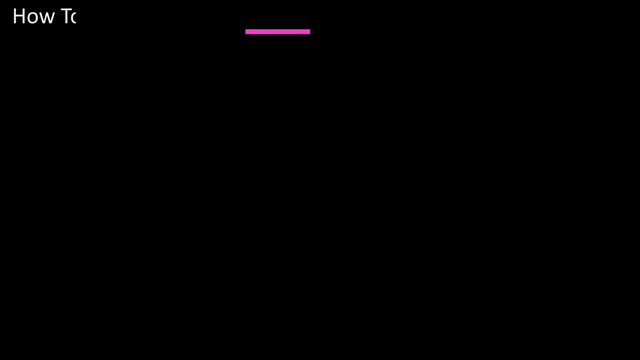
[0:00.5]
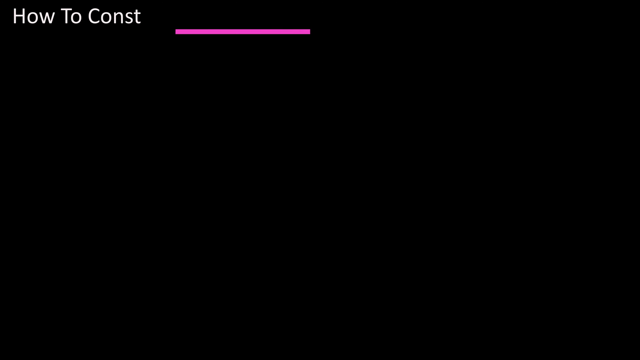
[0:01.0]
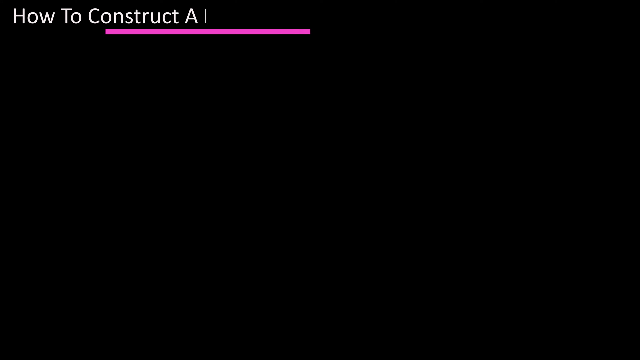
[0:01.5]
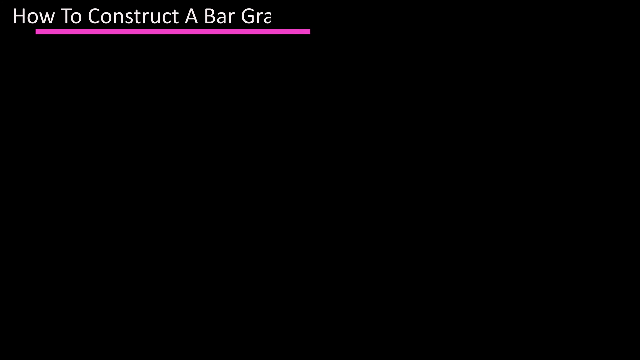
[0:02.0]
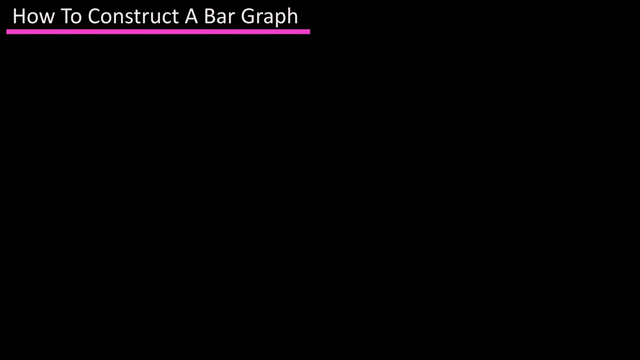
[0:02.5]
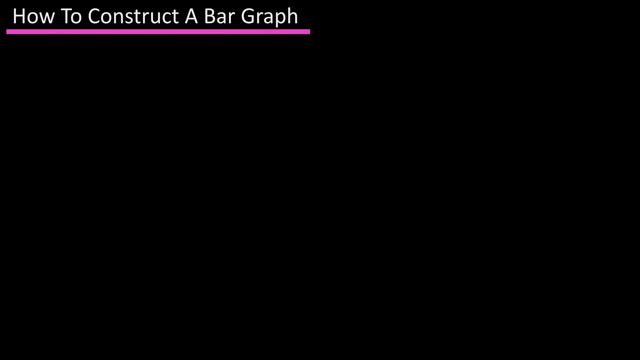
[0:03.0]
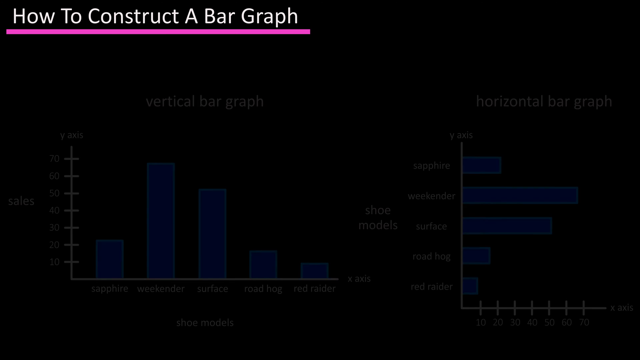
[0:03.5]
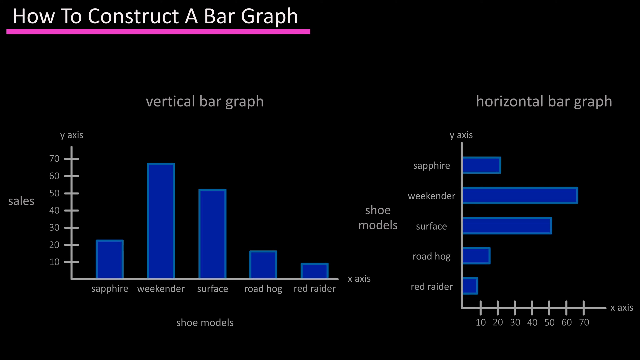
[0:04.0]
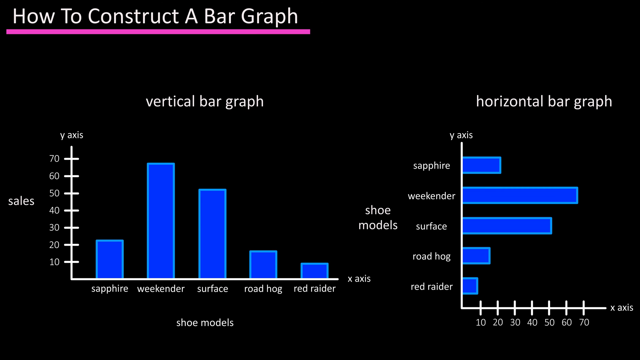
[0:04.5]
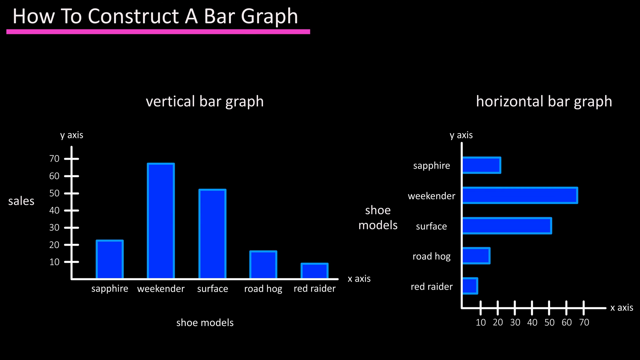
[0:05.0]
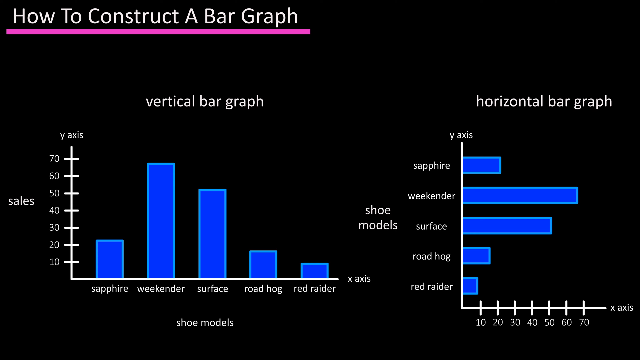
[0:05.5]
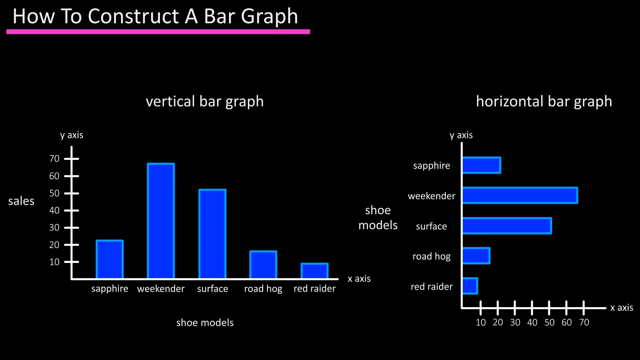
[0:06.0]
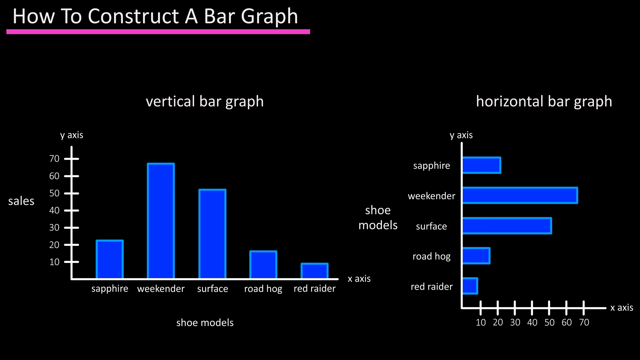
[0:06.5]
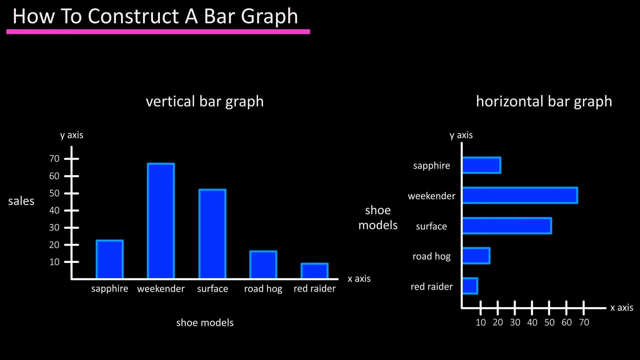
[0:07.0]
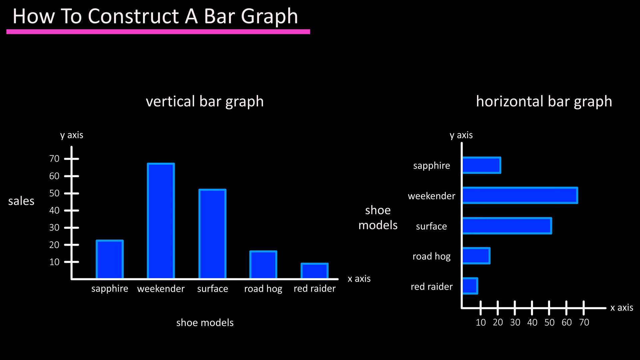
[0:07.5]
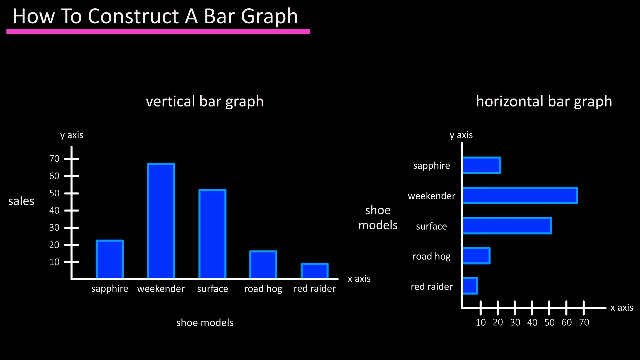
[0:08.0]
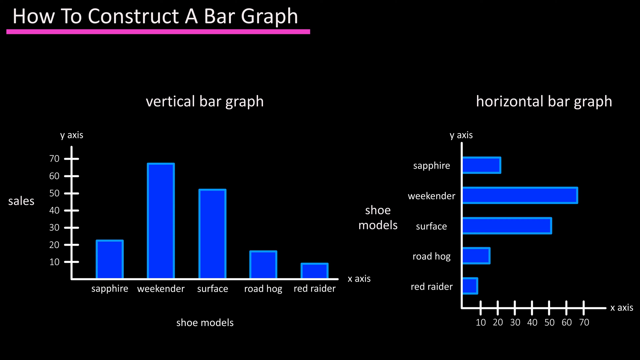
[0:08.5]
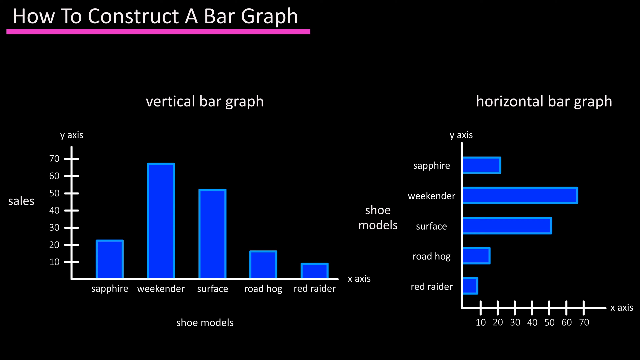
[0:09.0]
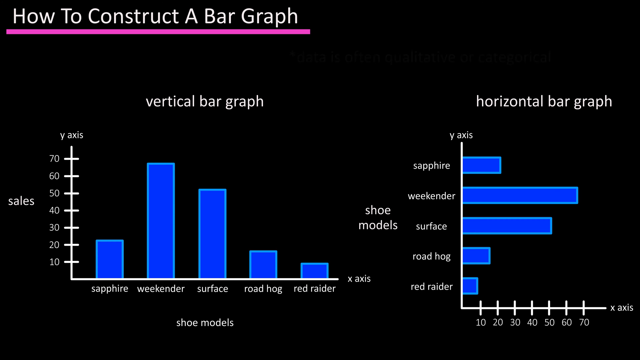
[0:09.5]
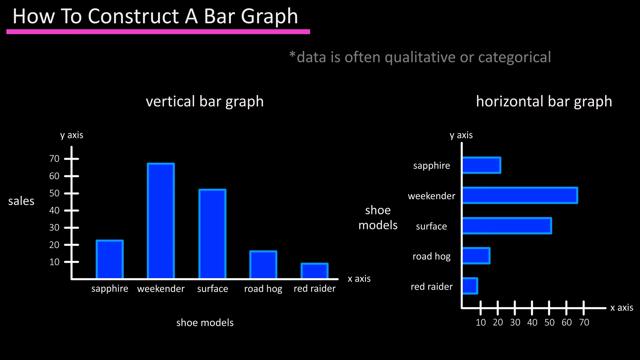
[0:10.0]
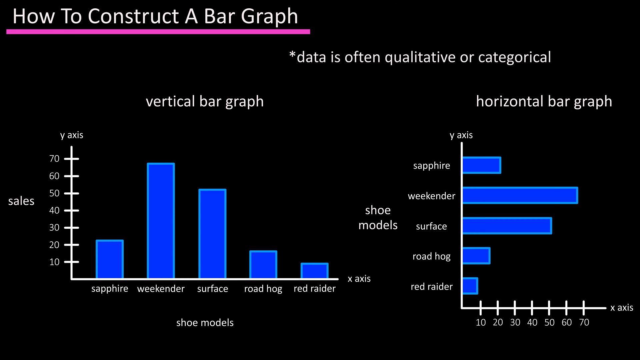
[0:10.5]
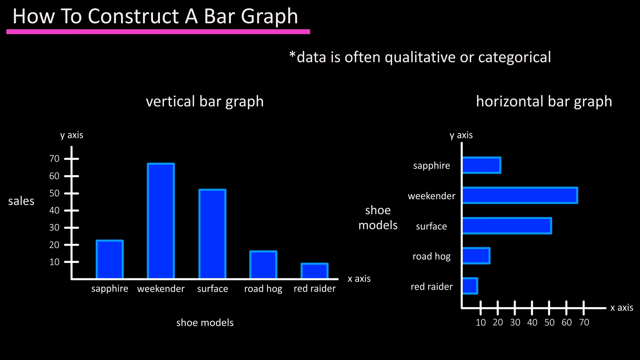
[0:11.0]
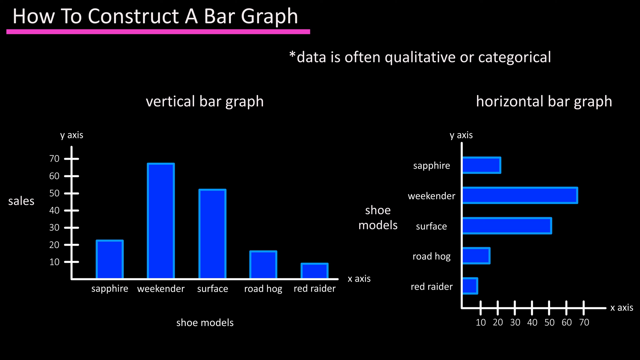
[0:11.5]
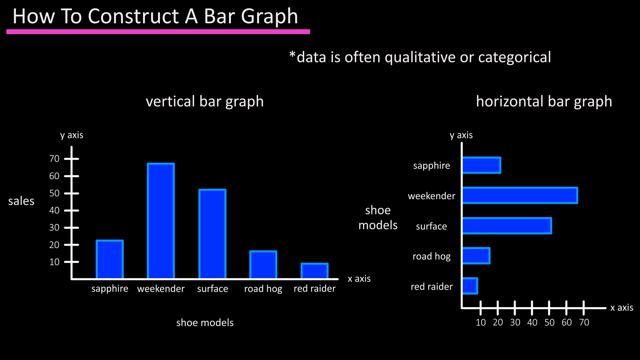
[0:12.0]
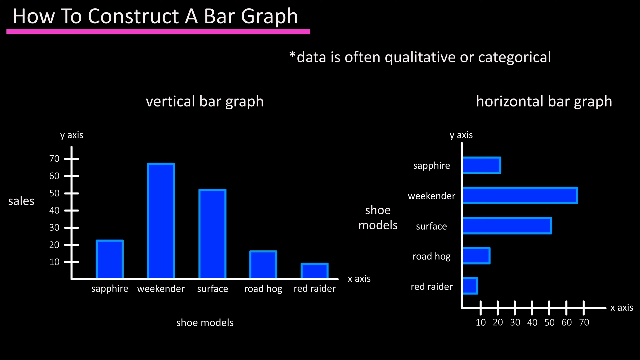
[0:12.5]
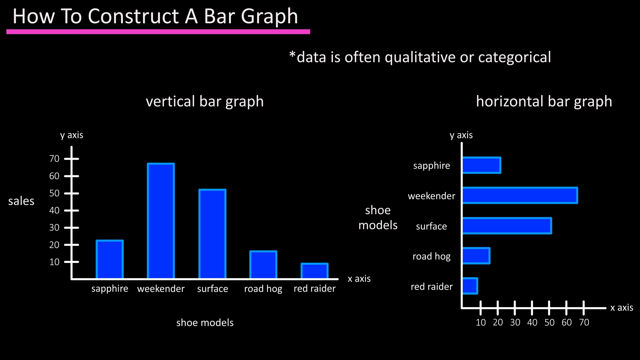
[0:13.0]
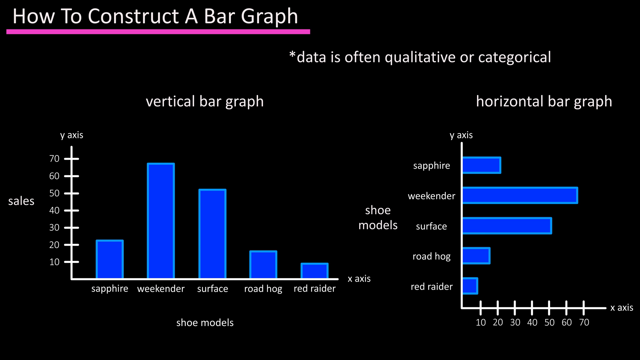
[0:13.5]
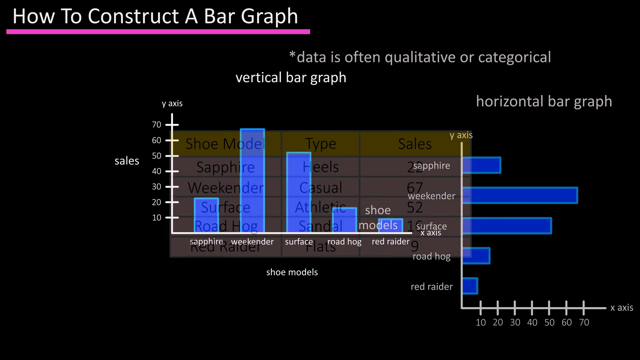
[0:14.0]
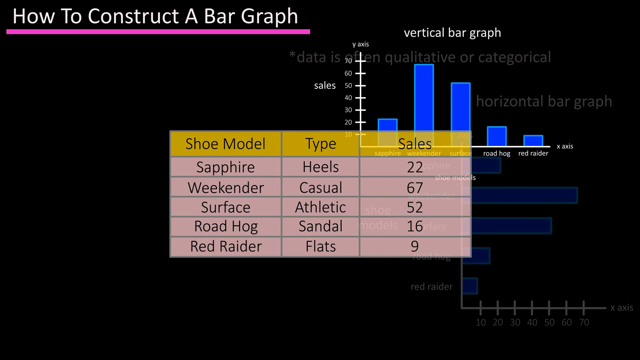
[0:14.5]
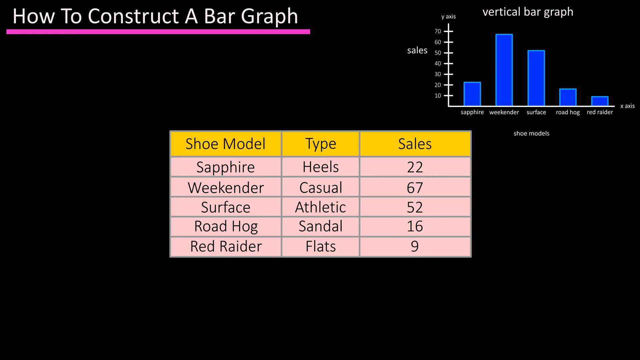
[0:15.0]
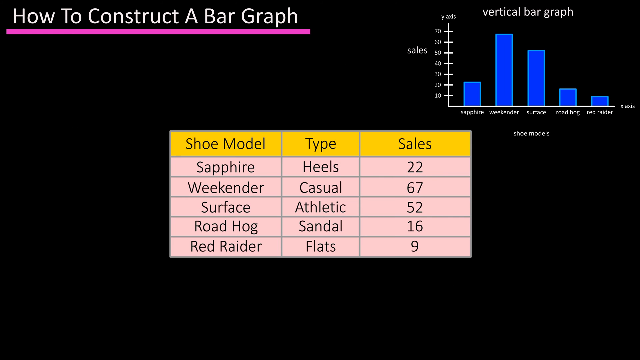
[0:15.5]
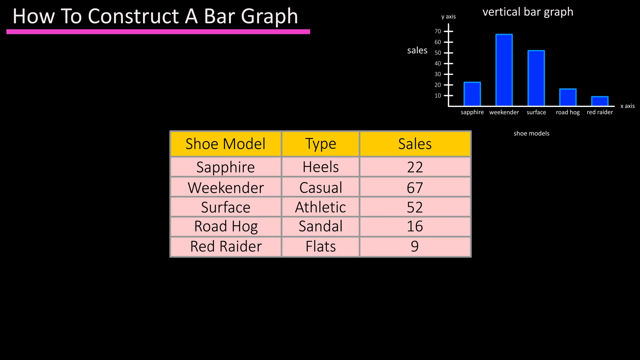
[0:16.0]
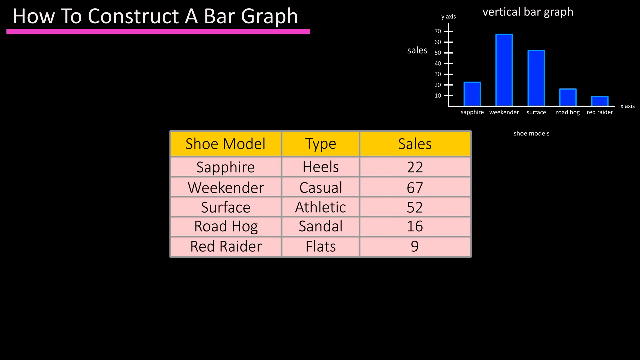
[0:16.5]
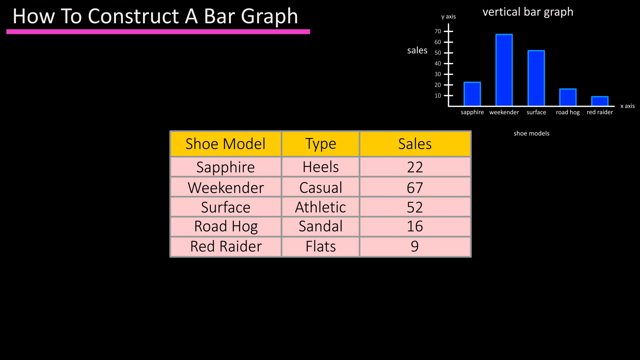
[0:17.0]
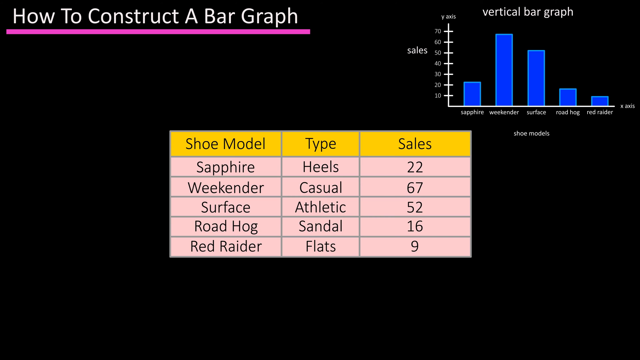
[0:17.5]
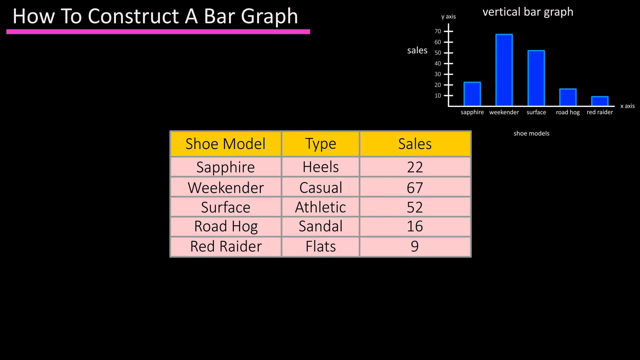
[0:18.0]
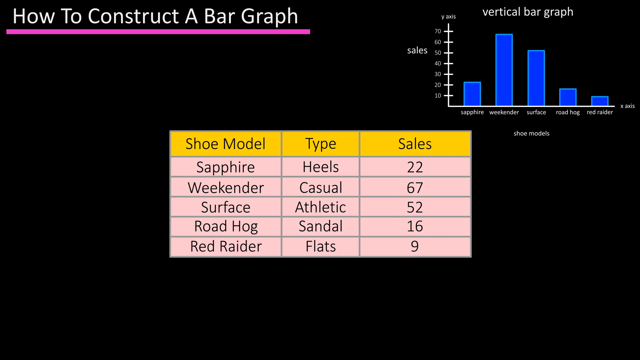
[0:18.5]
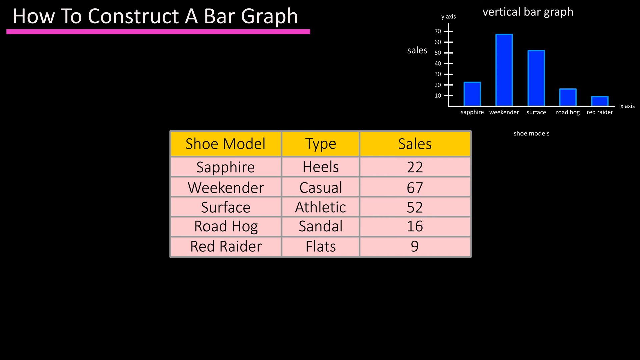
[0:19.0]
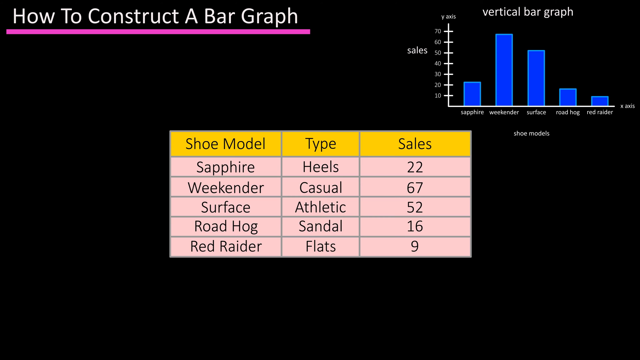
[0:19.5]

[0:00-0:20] The video opens with a bar graph, showing both a vertical bar graph and a horizontal bar graph with a variety of shoe models such as Sapphire, Weekender, Surface and Roadhog. It then turns to the numbers around the graph; for example, the heels number 22. First the graph is shown, then its components: the shoe items to be displayed and the number of each type of shoe, with apparently about six types of shoes each displayed with its number. The video then shows how those numbers are applied to the graph, bringing the numbers together in one picture.